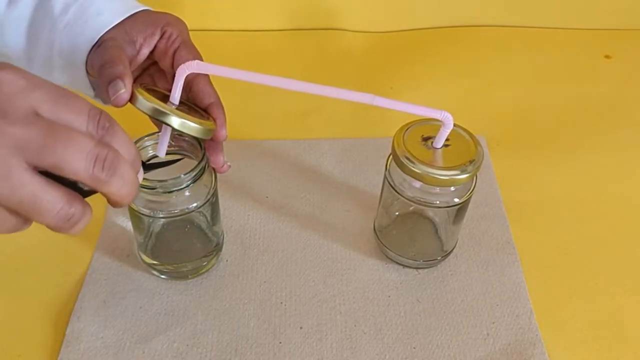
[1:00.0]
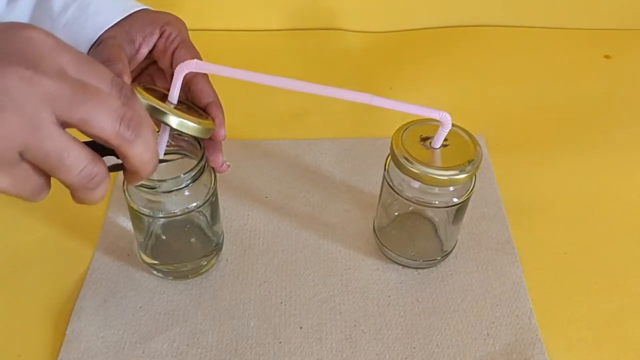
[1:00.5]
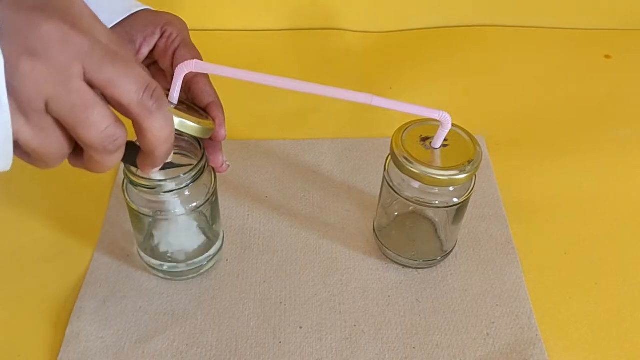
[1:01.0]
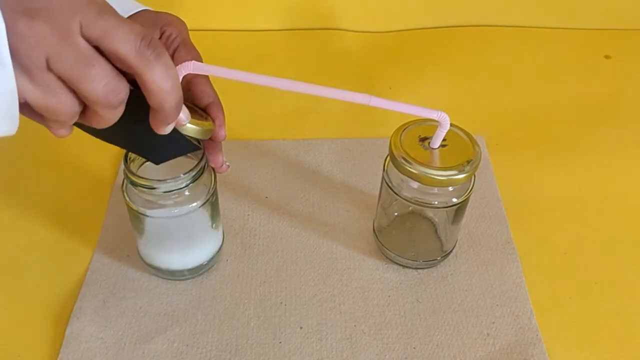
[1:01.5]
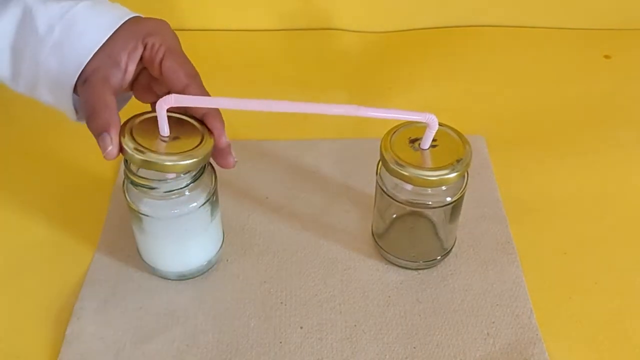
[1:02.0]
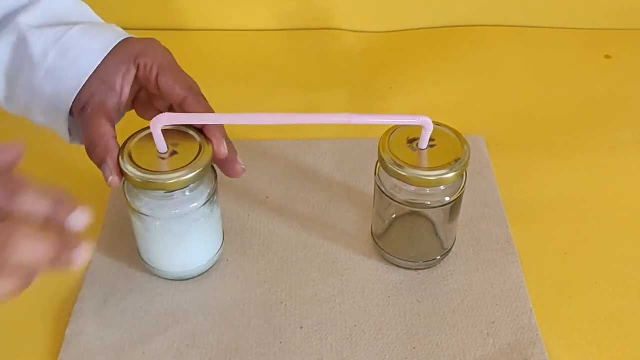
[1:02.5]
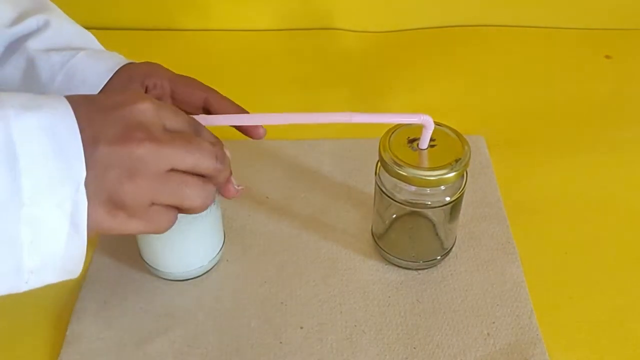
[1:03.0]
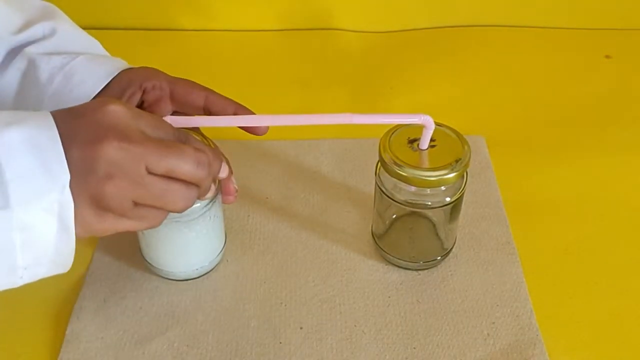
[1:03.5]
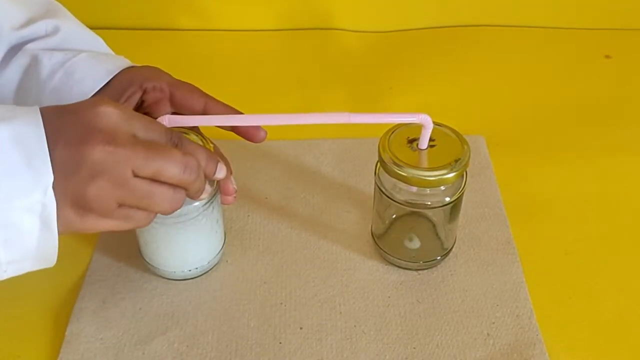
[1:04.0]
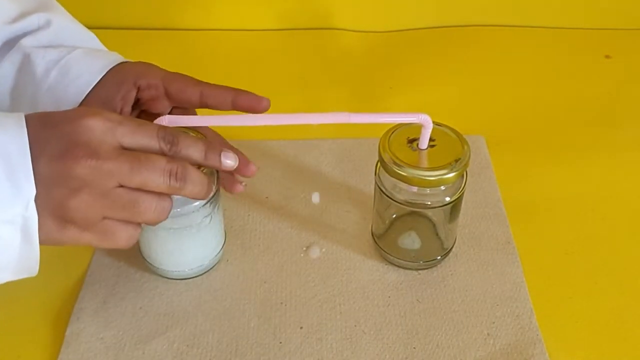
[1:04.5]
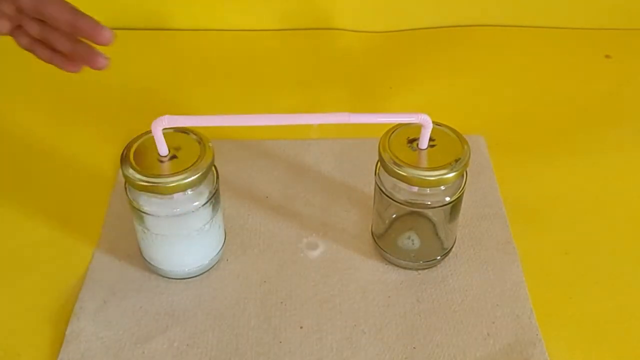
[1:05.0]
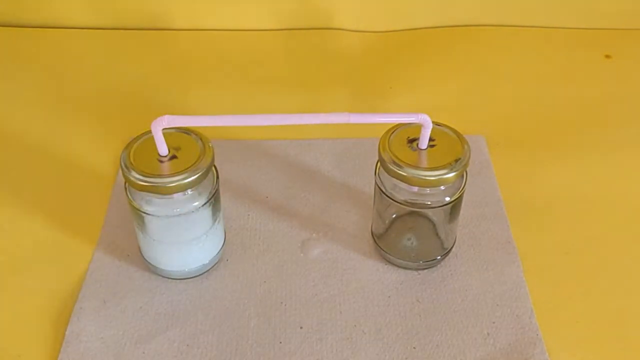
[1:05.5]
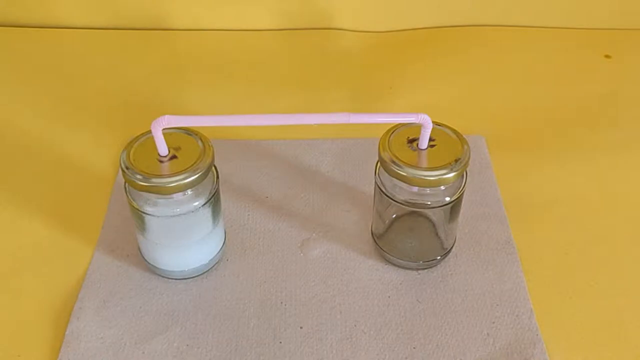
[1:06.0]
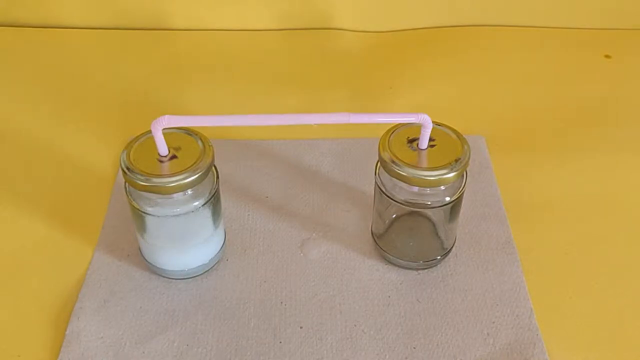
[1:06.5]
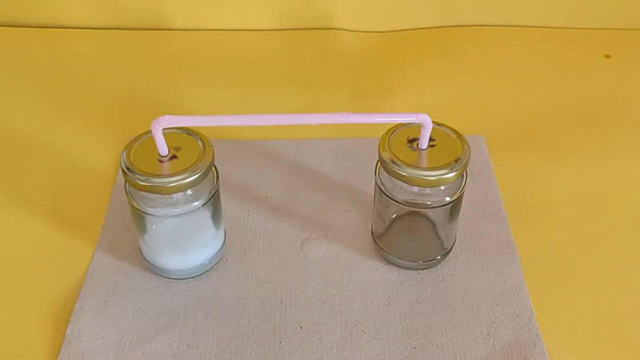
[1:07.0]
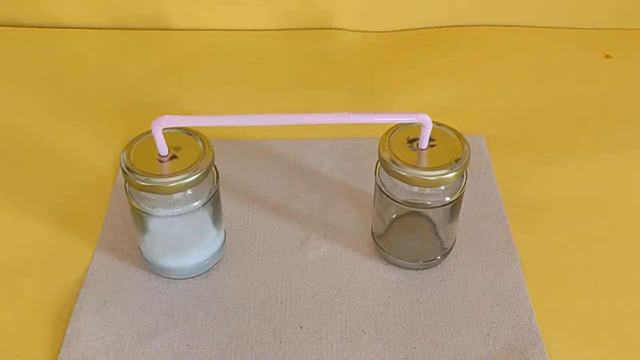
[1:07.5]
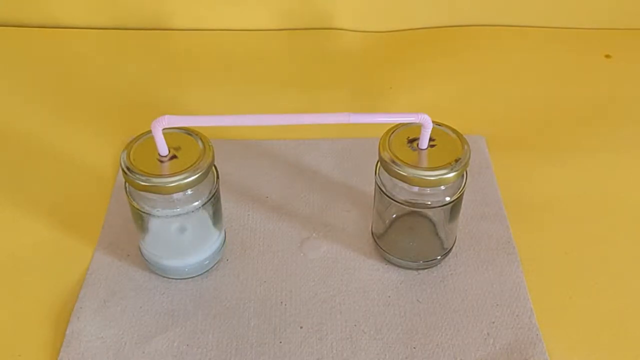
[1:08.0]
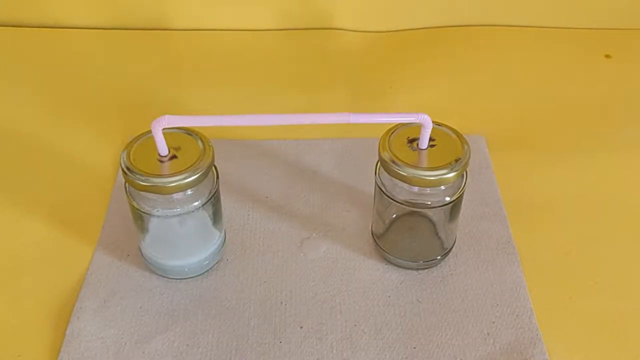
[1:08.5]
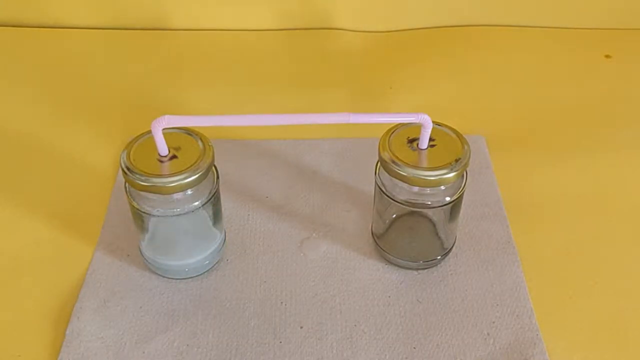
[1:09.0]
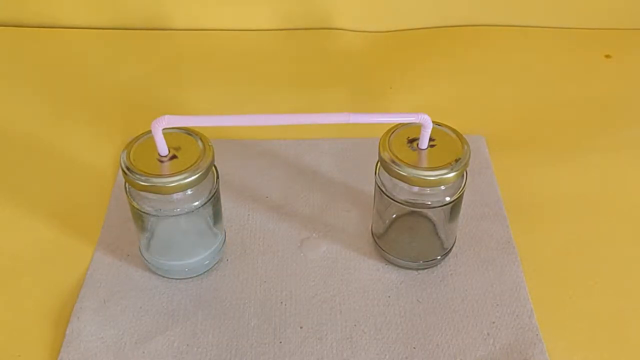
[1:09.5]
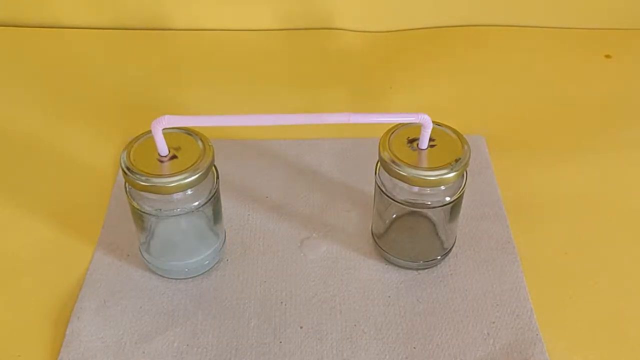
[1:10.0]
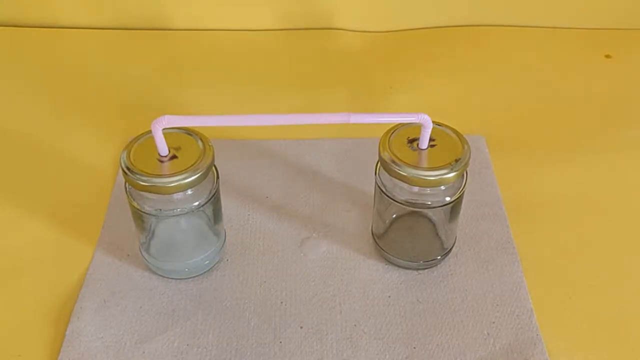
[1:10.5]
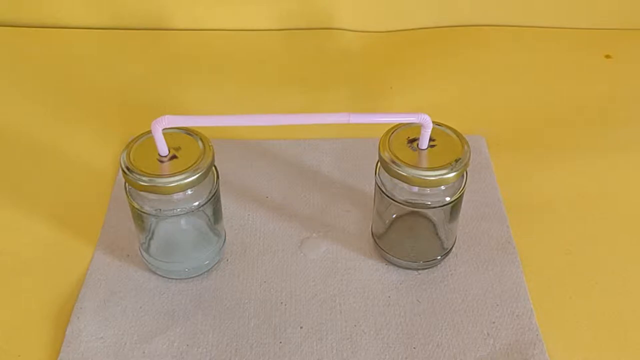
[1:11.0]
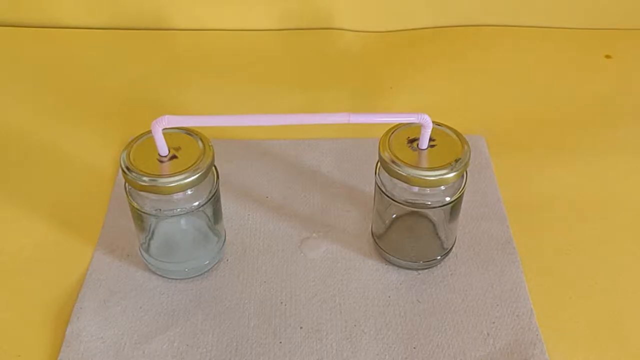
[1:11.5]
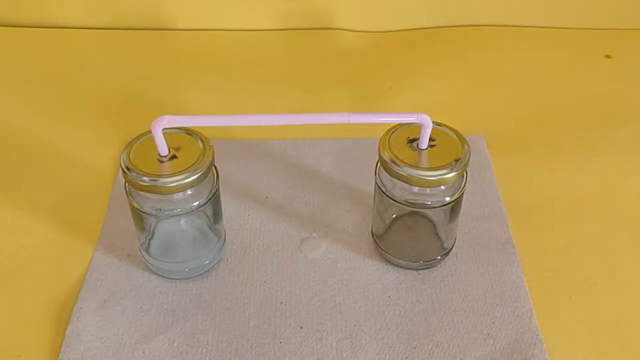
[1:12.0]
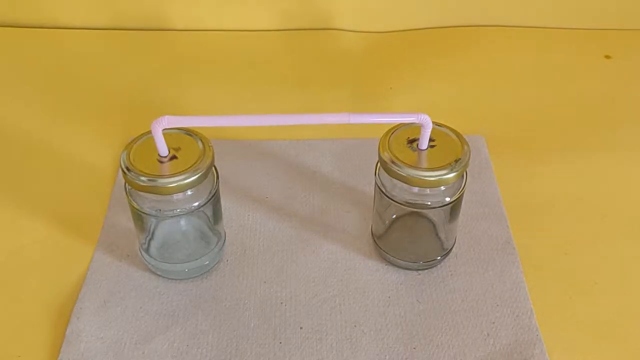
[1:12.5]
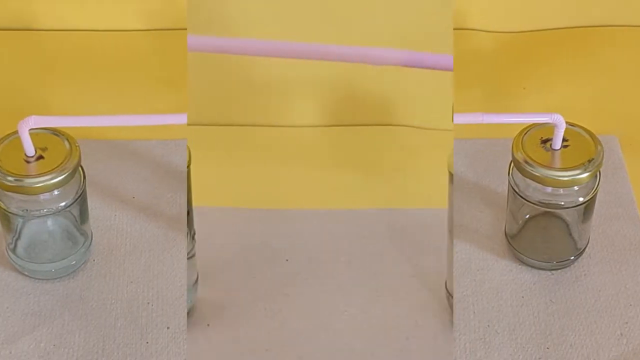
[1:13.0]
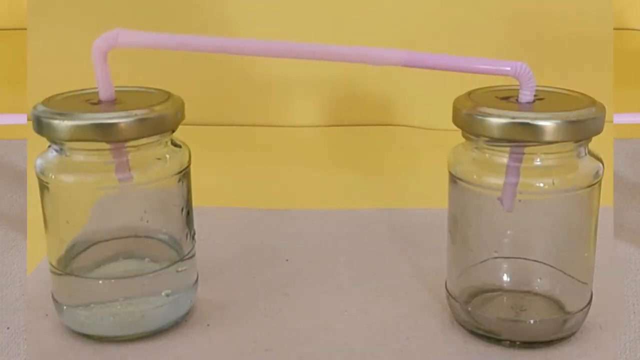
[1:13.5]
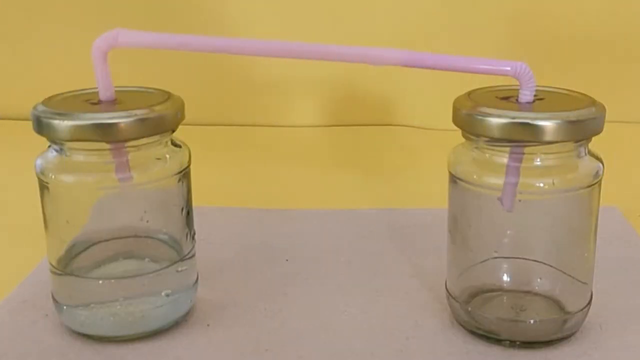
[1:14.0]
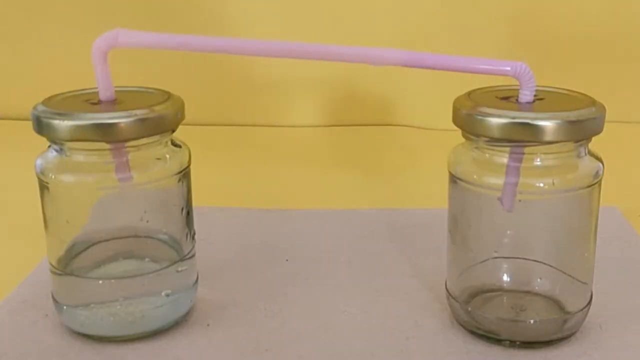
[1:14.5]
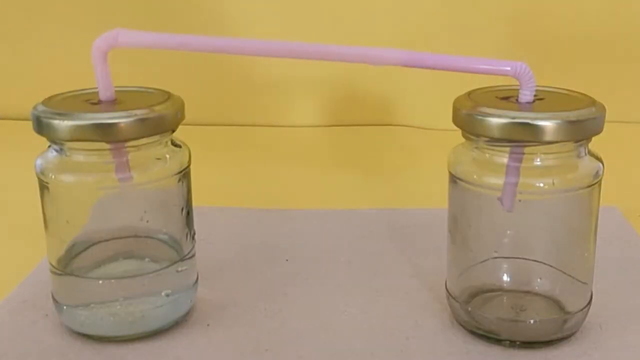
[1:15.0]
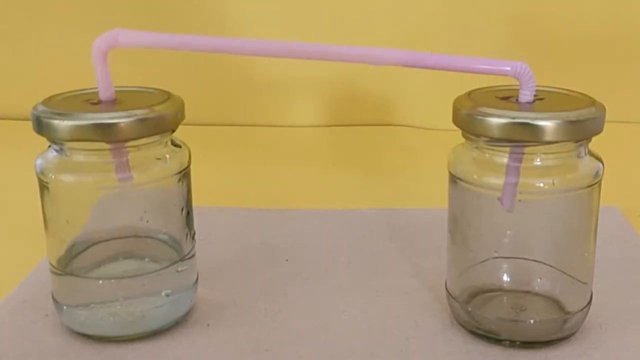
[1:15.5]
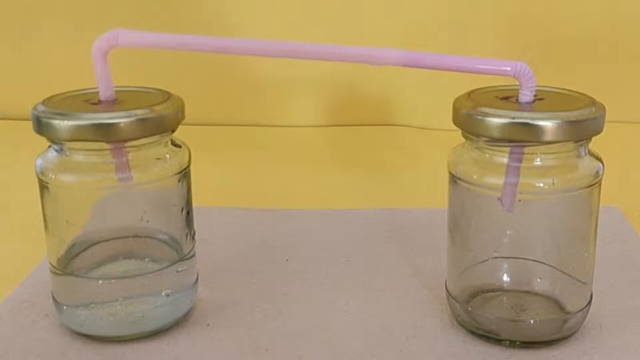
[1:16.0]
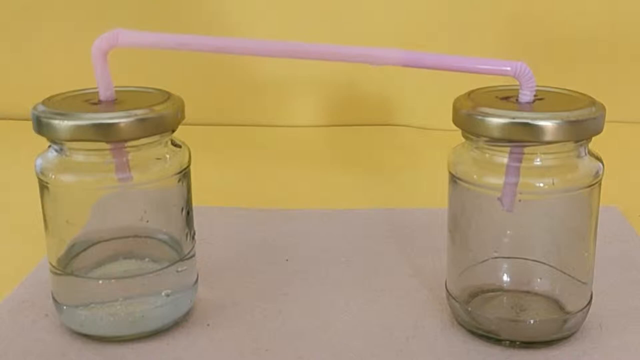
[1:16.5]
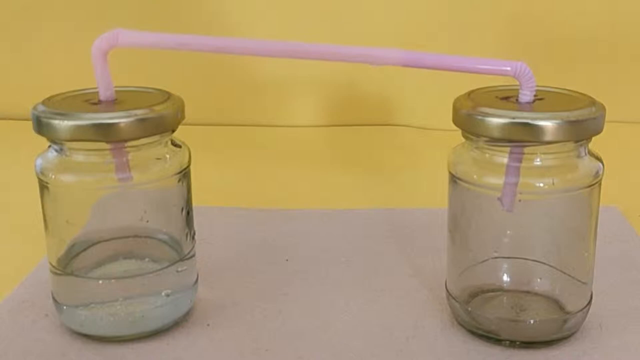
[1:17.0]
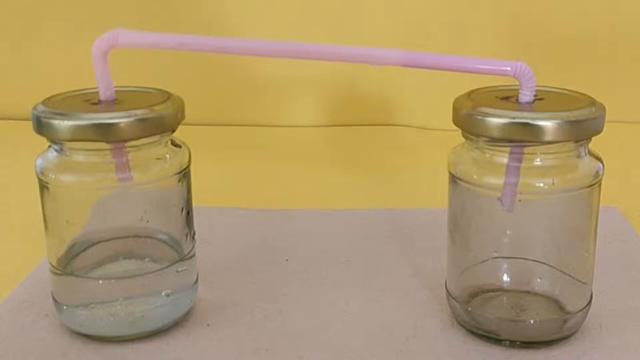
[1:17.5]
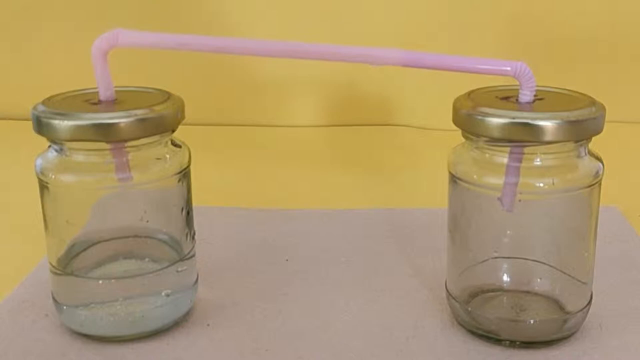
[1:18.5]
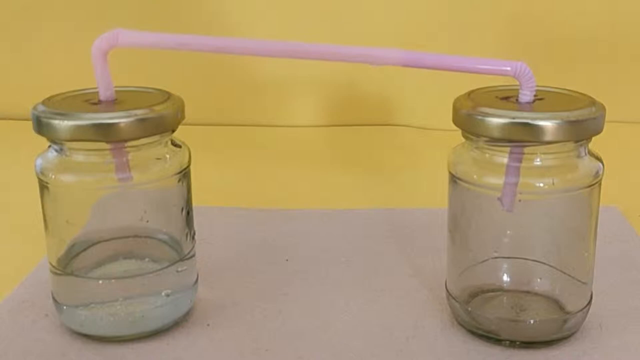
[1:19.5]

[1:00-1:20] A substance is poured into the left mason jar, and the jar is immediately closed: the vinegar and sodium bicarbonate are being mixed, with the carbon dioxide apparently meant to travel through the straw into the right-hand mason jar. As soon as the scientist pours the sodium bicarbonate into the vinegar, they twist the jar closed as tight as possible, and a couple of drips come out of the middle of the straw where the two straws are connected. The straws do not look taped; it looks like one is just placed inside the other. The two mason jars each have a cover with a hole in it, with a straw in each that are linked together.